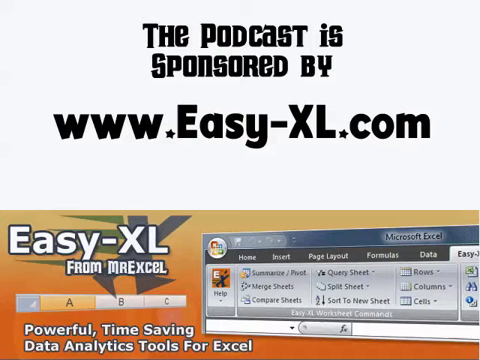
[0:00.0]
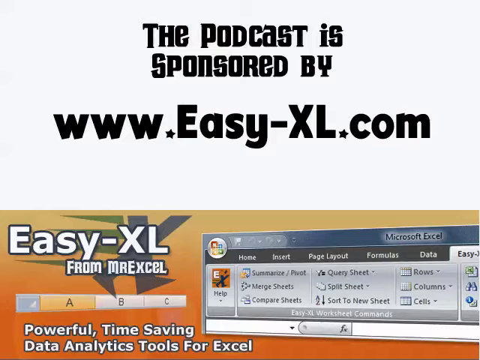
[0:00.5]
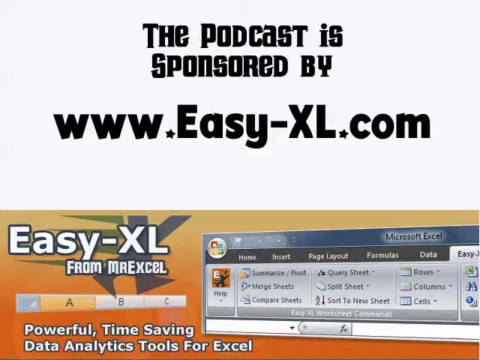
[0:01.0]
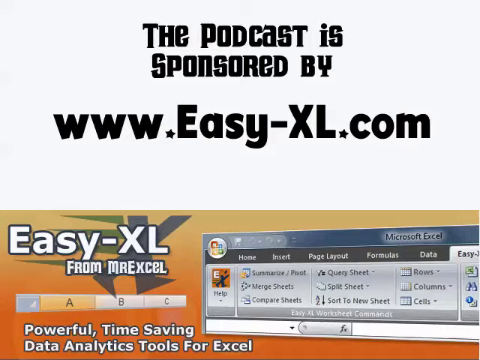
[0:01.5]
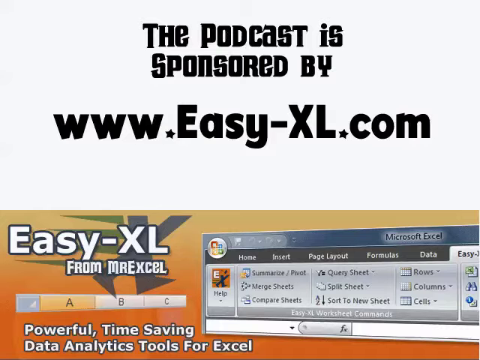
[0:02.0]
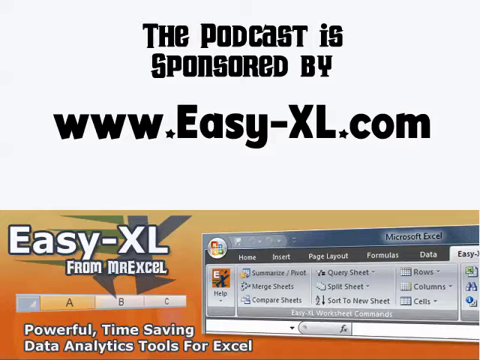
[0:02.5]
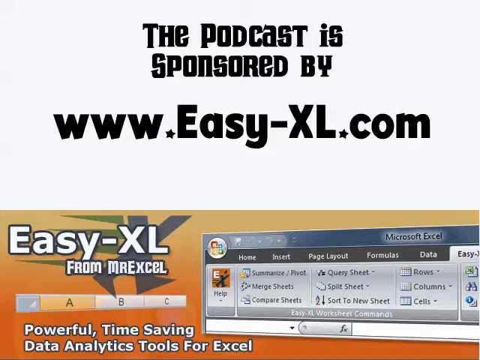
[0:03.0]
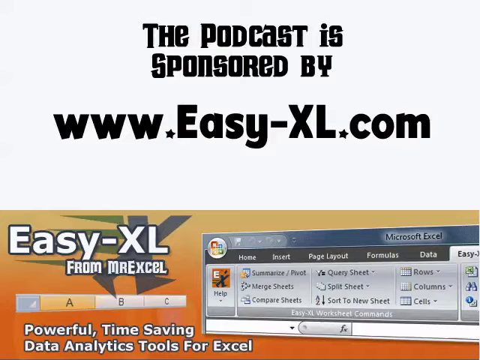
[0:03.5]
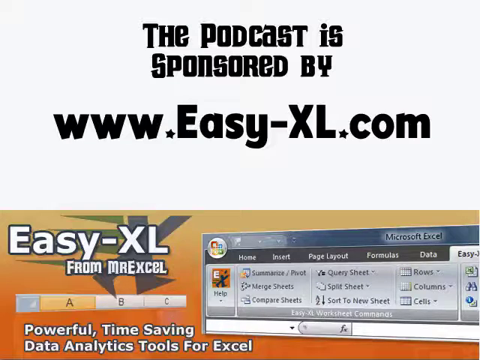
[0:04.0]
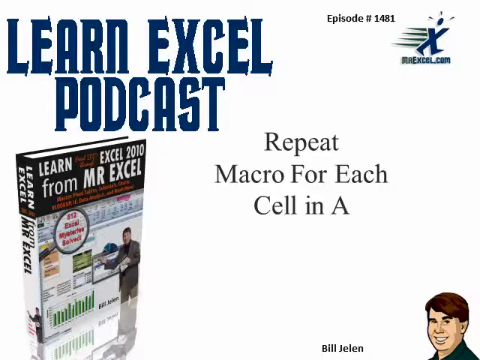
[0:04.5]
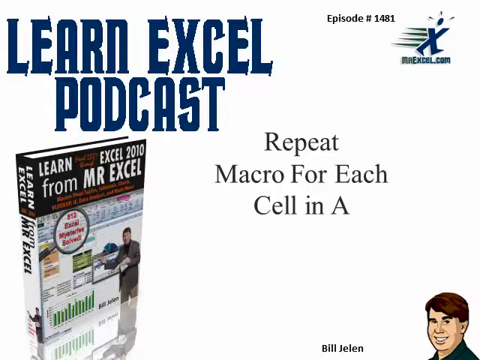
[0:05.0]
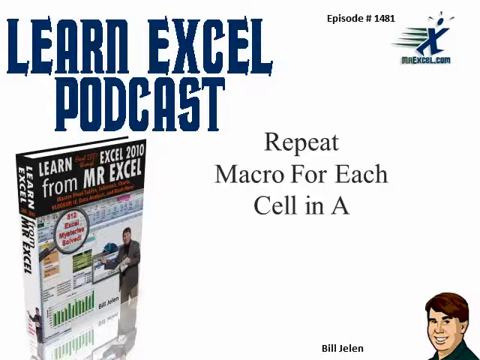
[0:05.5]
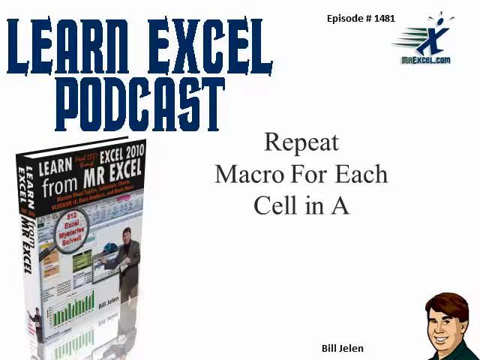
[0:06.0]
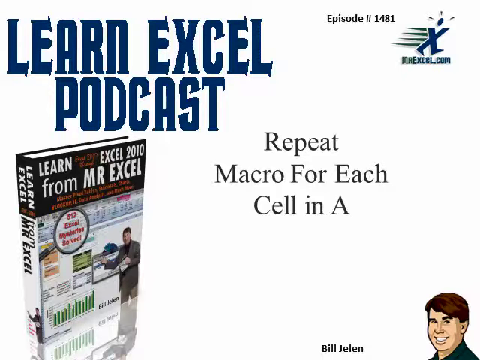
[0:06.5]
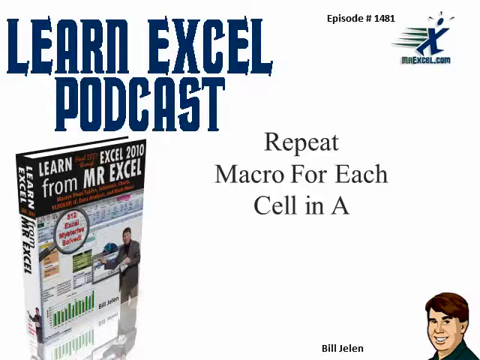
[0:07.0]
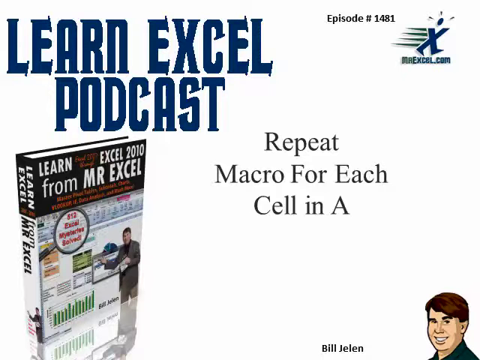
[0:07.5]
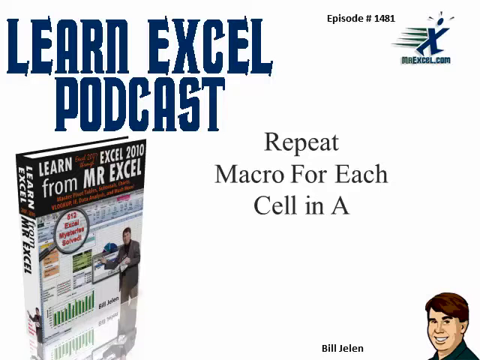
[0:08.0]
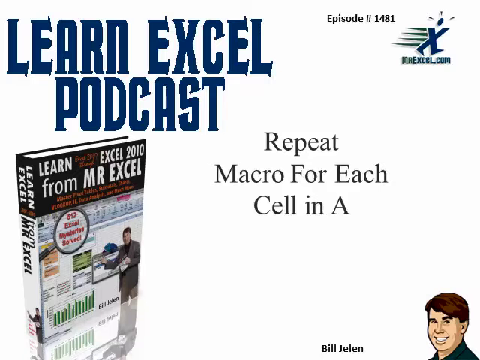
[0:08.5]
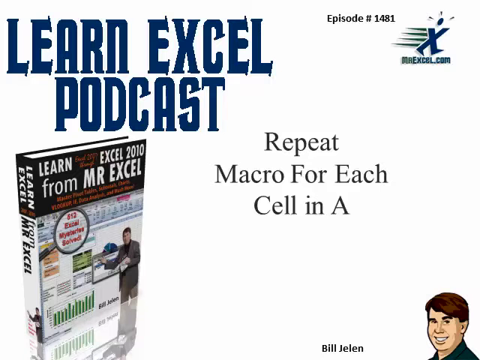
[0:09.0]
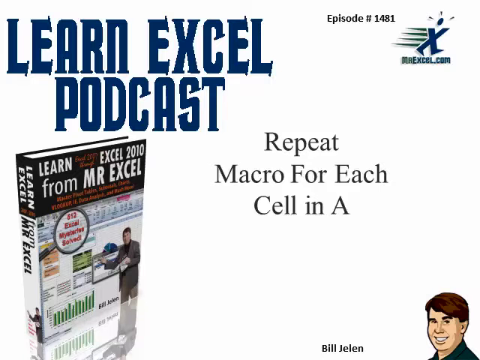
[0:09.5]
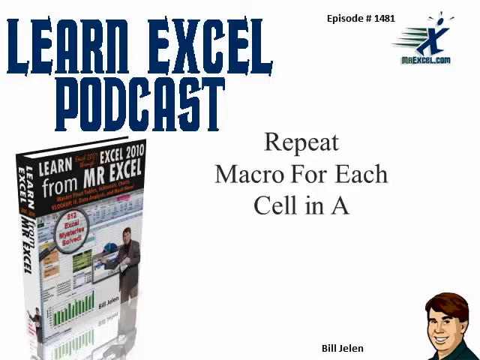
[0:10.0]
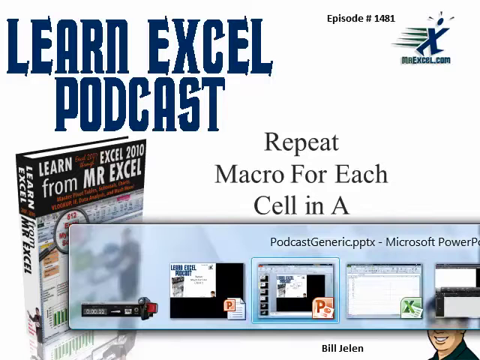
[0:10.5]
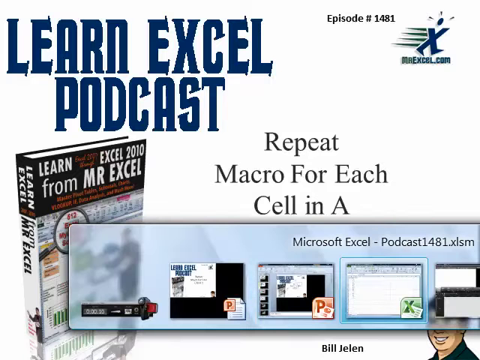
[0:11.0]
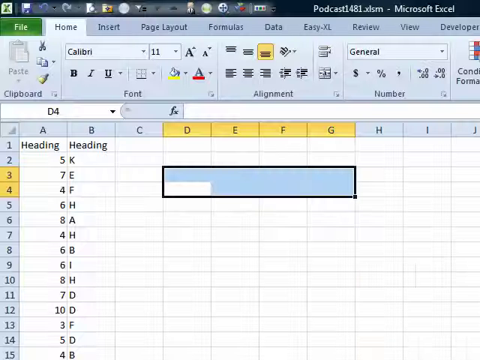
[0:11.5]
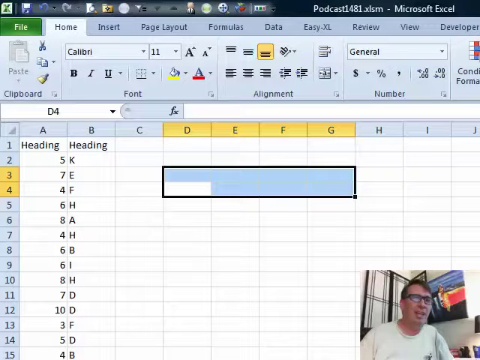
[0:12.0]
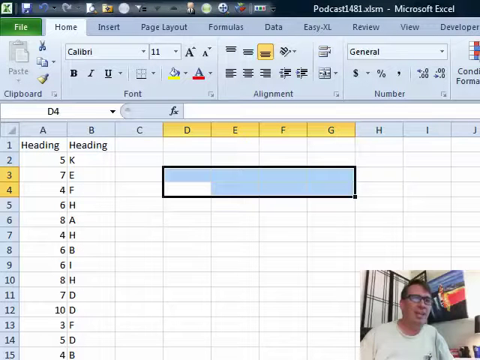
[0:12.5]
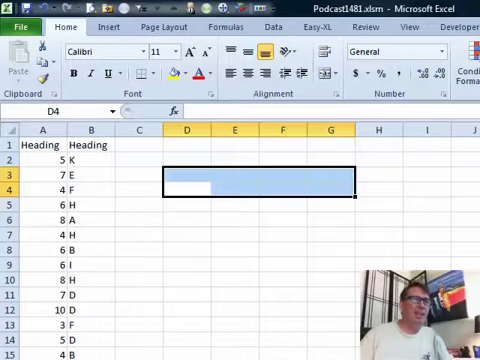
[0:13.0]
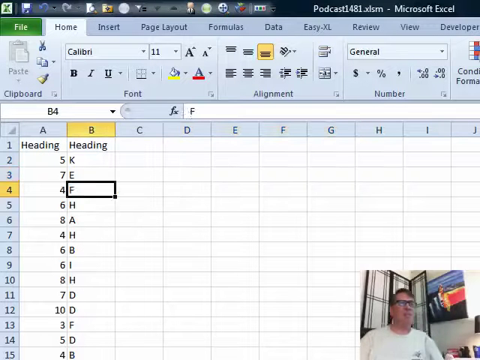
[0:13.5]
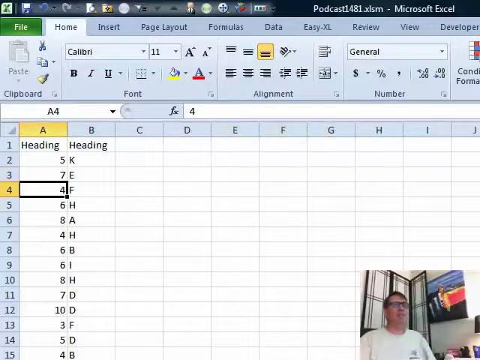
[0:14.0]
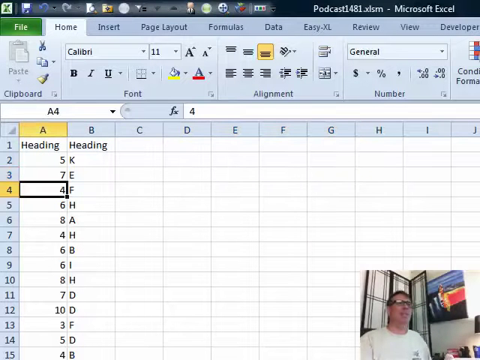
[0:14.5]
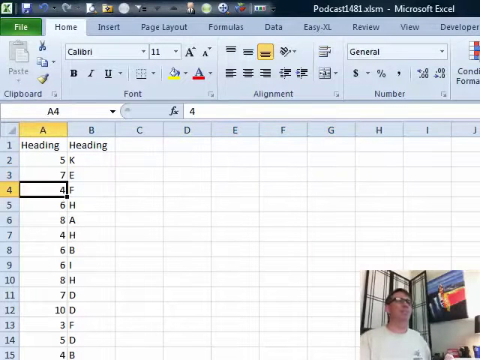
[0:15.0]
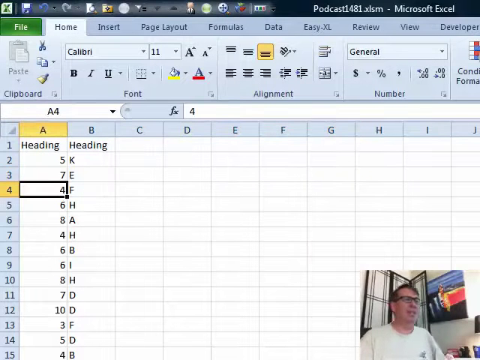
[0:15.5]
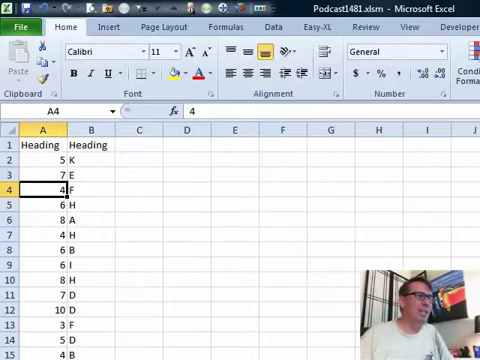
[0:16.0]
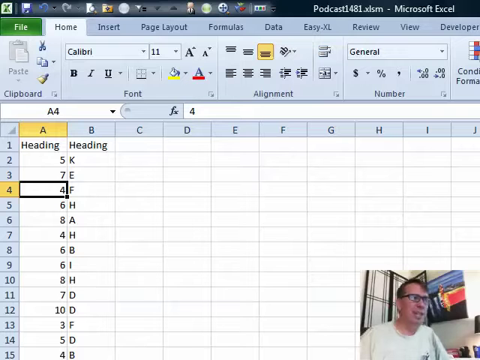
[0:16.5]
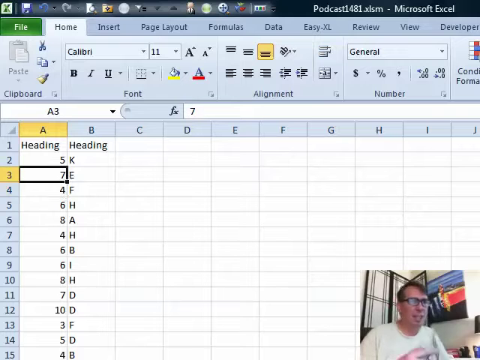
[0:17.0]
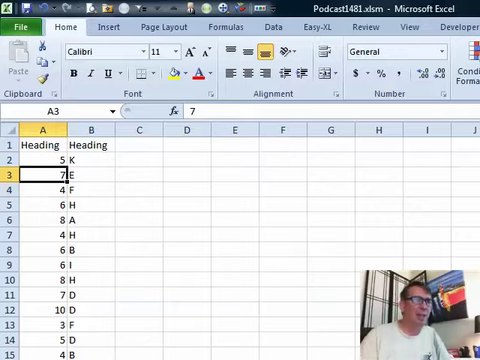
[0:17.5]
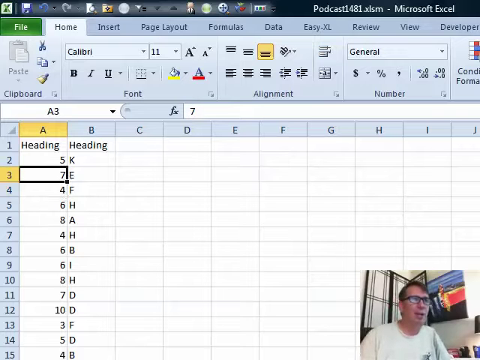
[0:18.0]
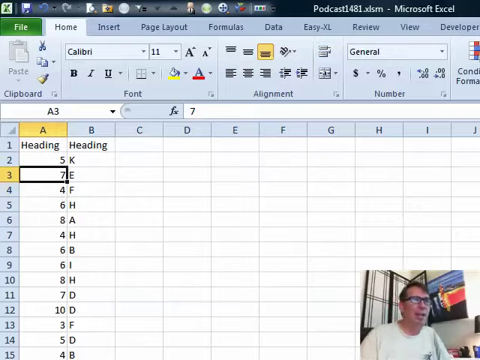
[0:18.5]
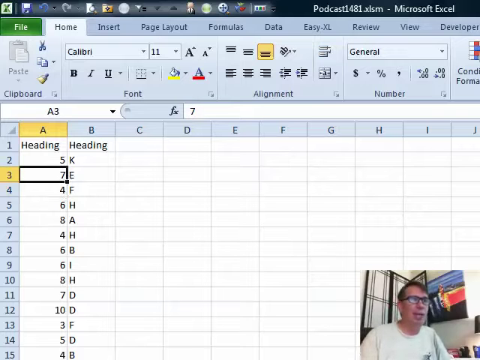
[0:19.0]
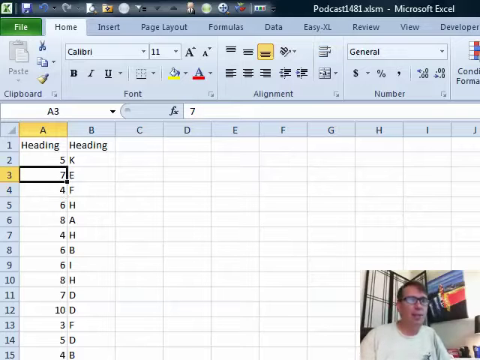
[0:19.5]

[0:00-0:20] This video is a podcast that teaches Excel, called learn Excel podcast. A book and an avatar appear at the bottom left, and "Episode 1481" is at the top right. The man's name is Bill Jelen. There is an X symbol that looks like a person walking, with "MREXCEL.COM", and below that the text "Repeat Macro for Each Cell in A." An Excel spreadsheet is shown, with a man talking in the bottom right-hand corner; he looks about forty, is white, and has brown hair and glasses. He appears to be explaining how to use Excel and demonstrates on a spreadsheet. Columns A and B each have "Heading" at the top, with numbers down column A and letters down column B. Then a screen shows that the podcast is sponsored by "www. Easy-XL.com" from MrExcel, along with part of a spreadsheet.